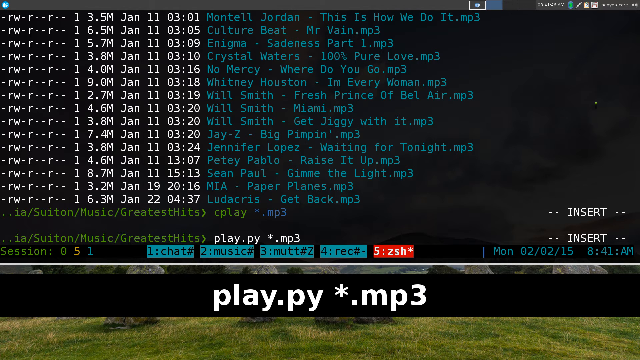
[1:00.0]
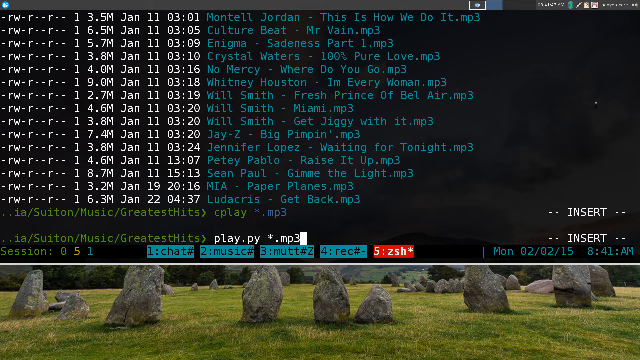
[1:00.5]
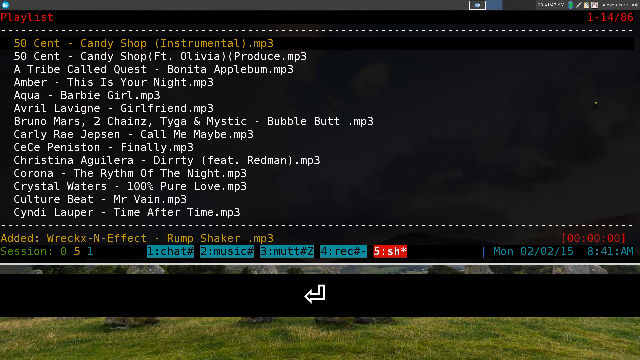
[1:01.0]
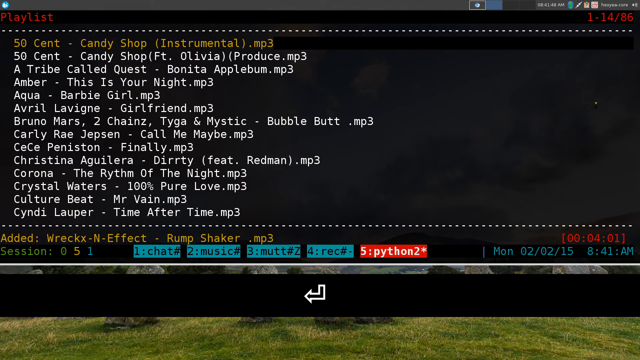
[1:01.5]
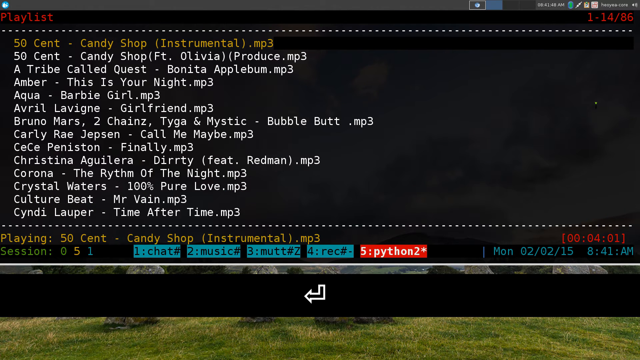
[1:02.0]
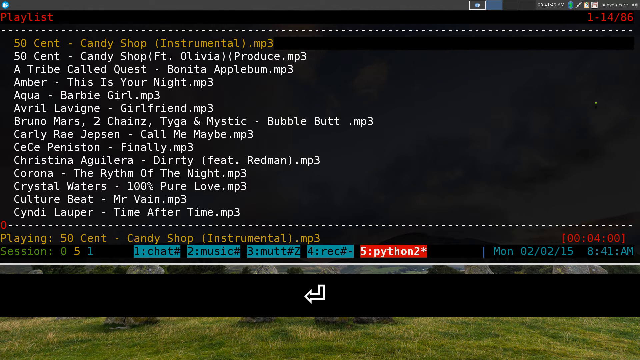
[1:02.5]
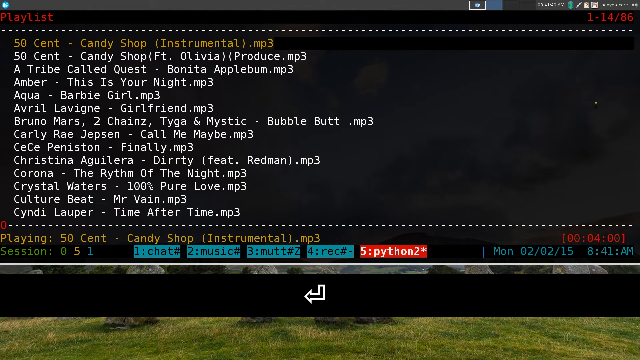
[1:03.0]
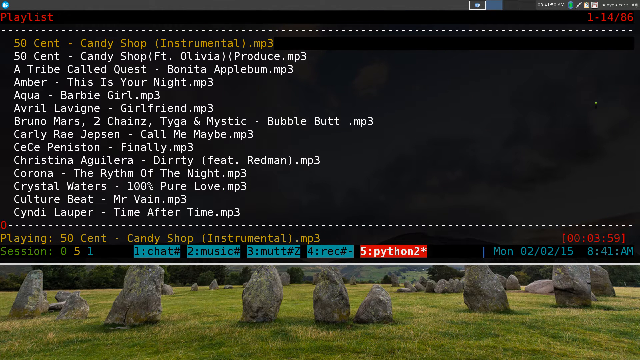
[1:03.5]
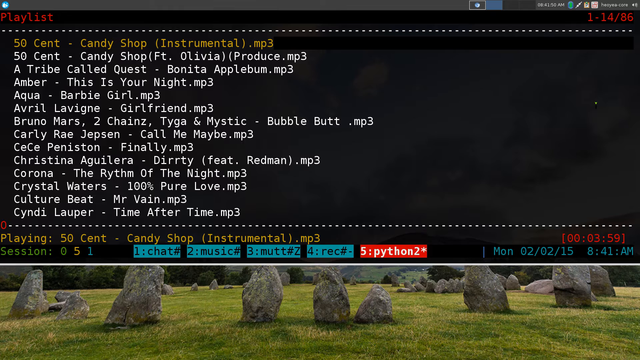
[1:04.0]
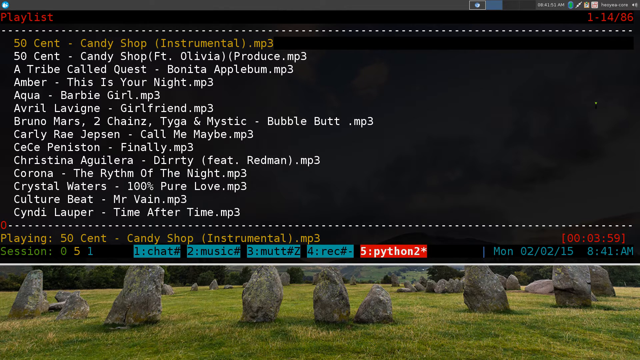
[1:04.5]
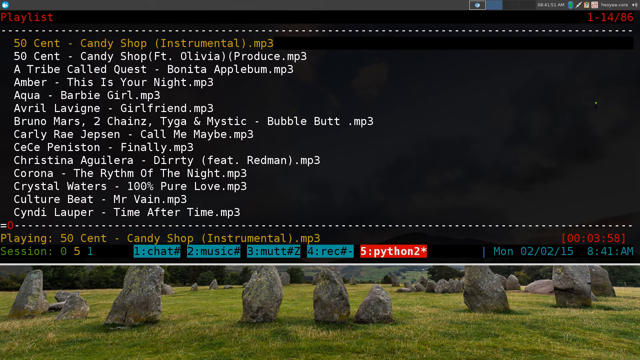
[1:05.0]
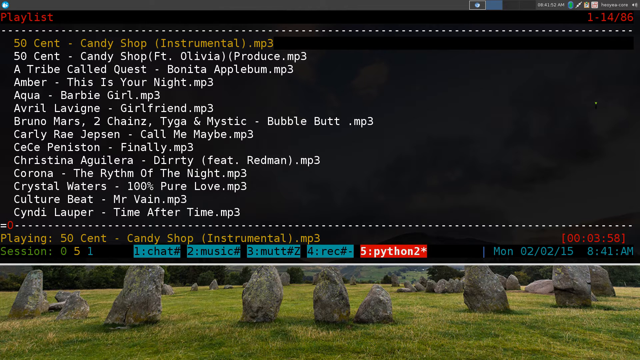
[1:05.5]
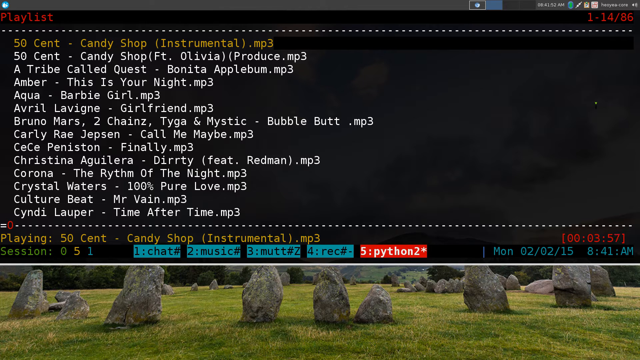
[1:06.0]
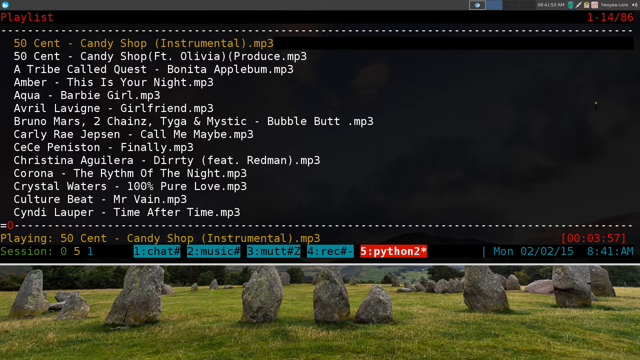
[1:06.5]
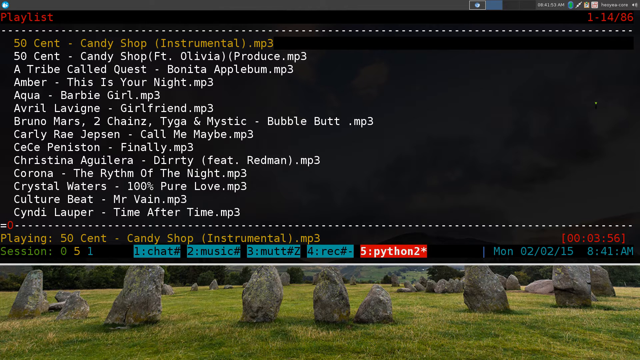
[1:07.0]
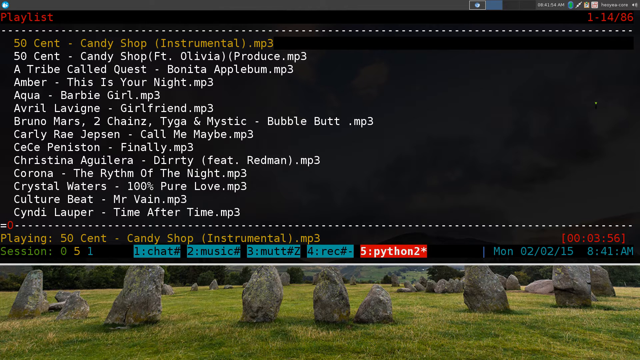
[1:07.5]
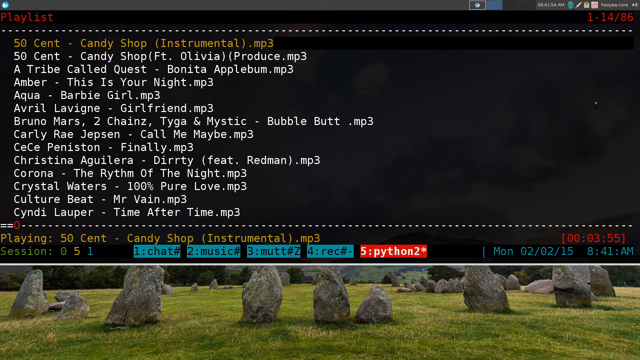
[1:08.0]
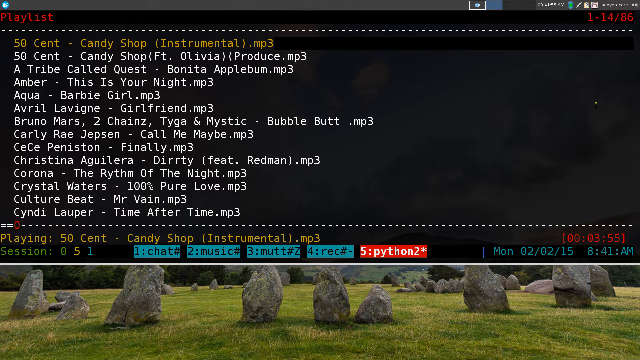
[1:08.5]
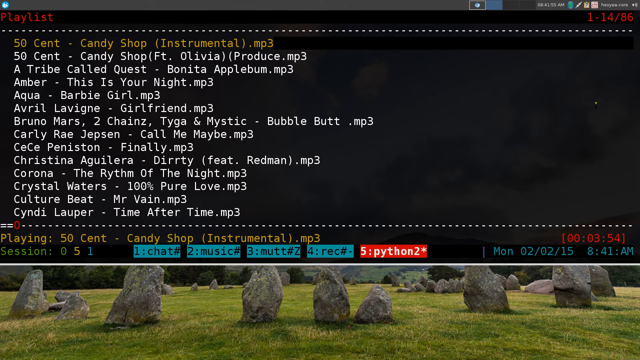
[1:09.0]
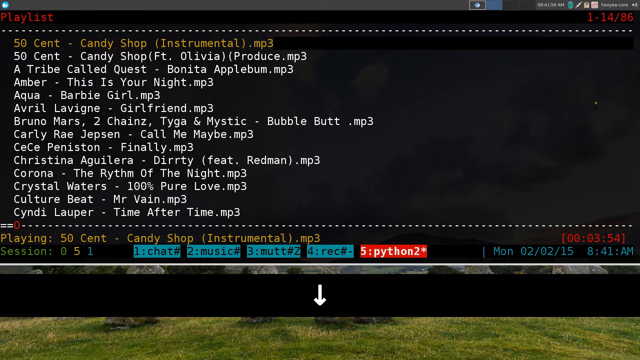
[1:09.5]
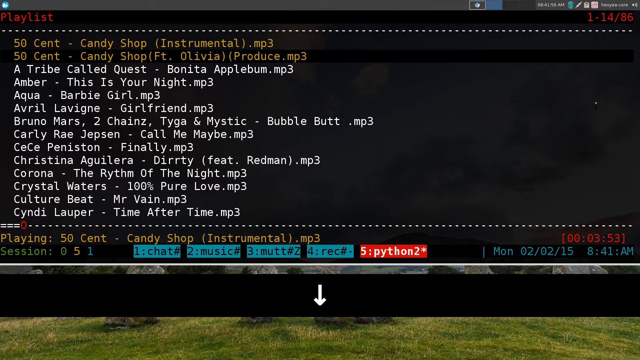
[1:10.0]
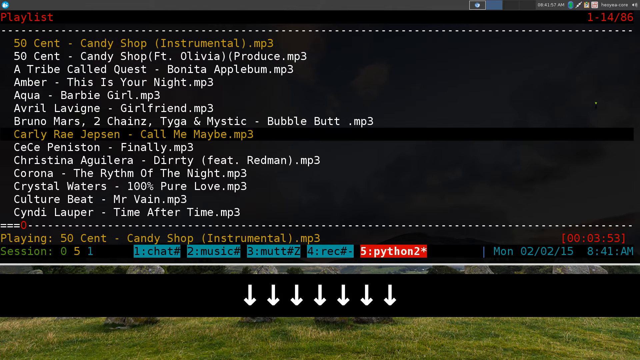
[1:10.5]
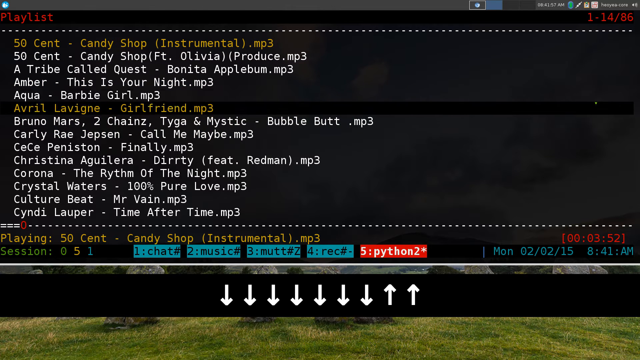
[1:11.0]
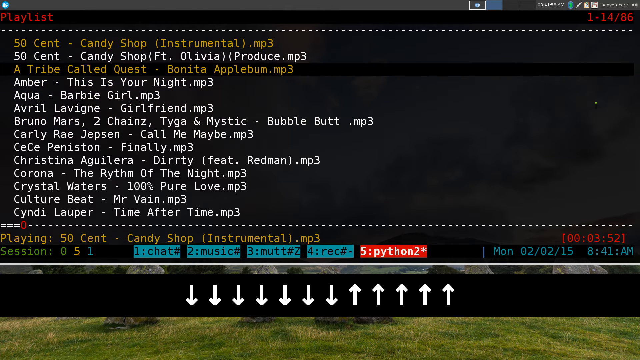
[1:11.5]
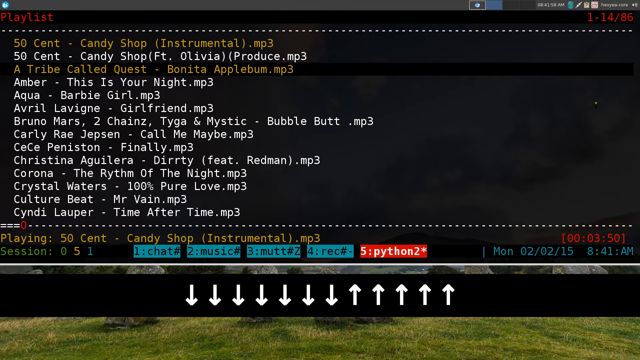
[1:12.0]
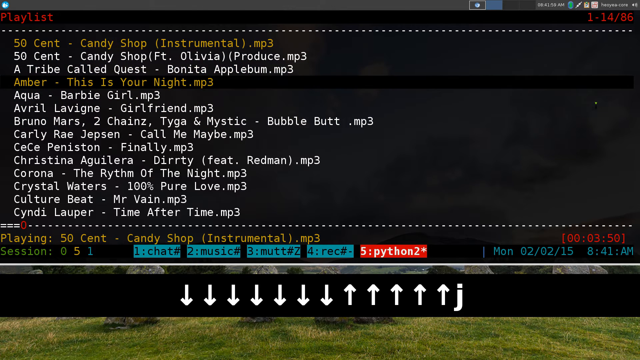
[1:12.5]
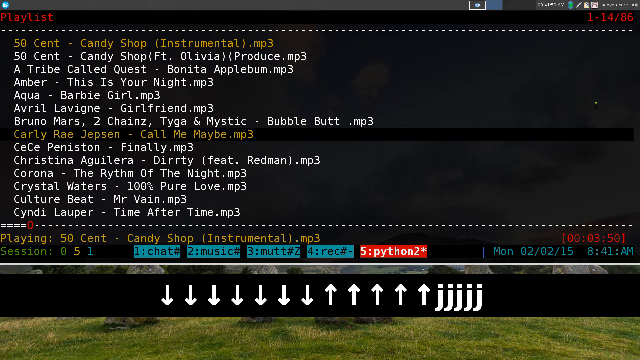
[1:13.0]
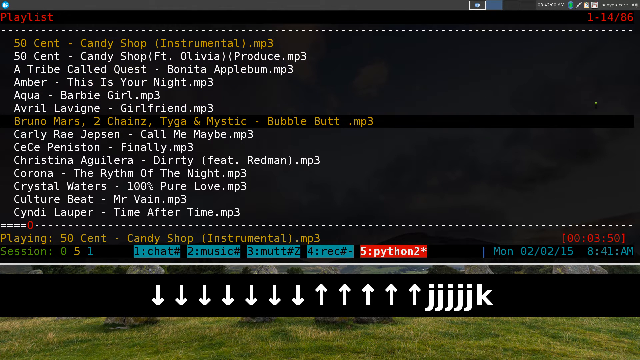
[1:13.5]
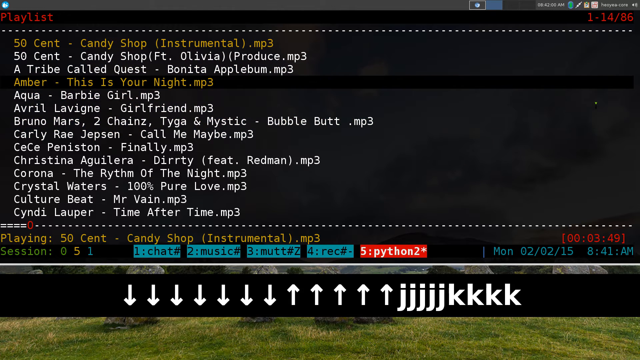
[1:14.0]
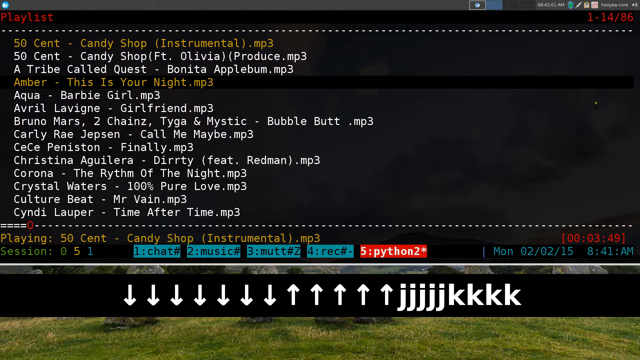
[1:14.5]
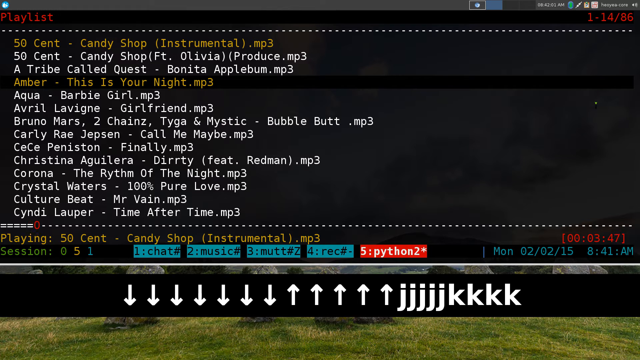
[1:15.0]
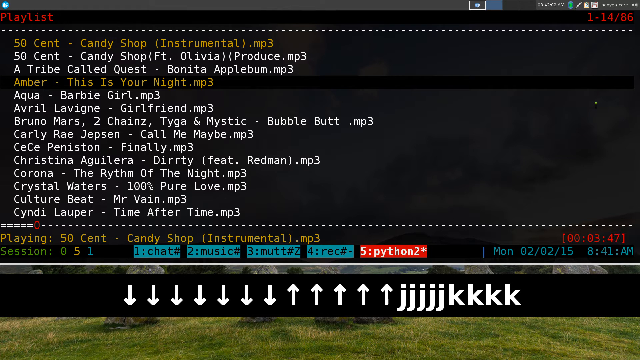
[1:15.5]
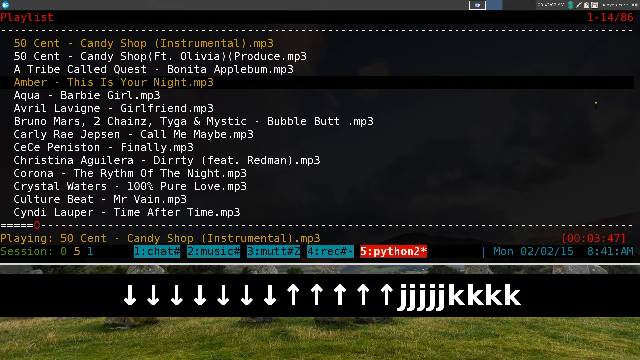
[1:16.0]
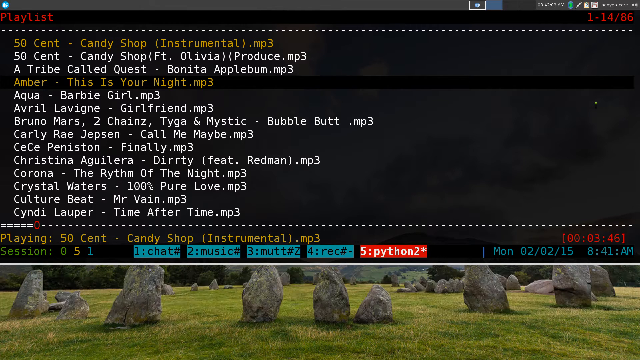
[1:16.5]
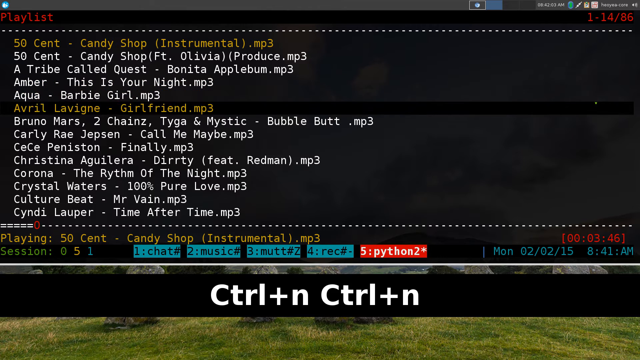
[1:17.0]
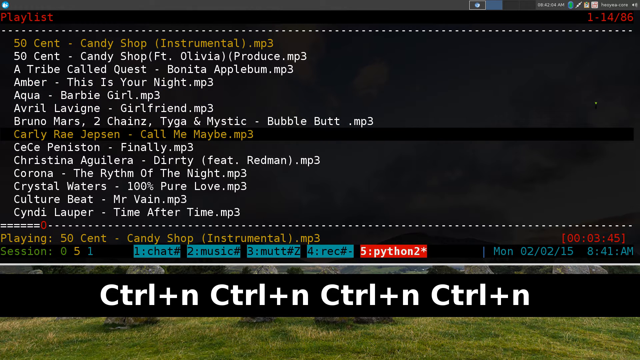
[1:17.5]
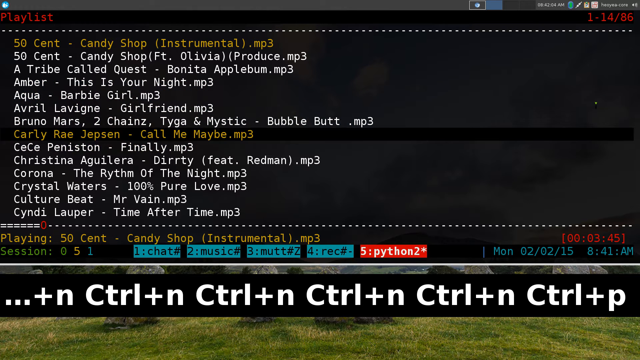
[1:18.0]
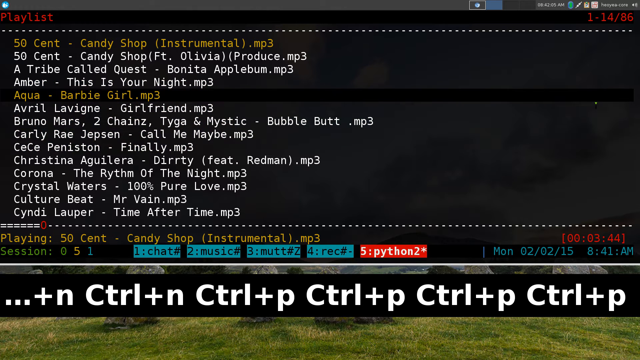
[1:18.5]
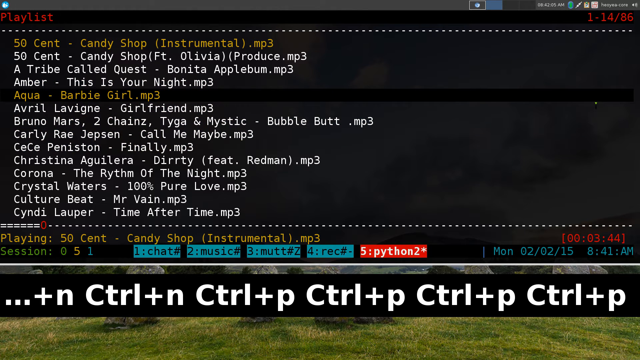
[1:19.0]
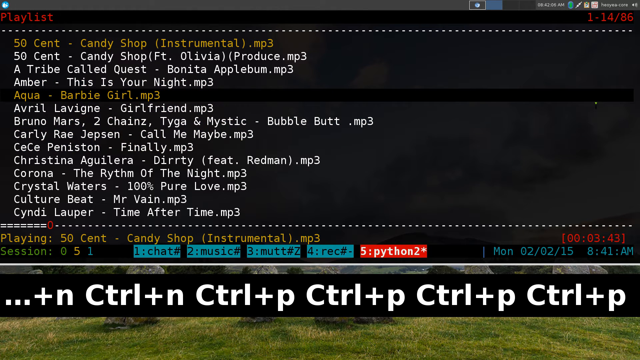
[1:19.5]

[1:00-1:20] After the user types play.py followed by *.mp3, a playlist player similar to the earlier one opens, but this time the word playlist and the time in the lower right corner showing how much of the song is left are red. The screen shows the first 14 songs of the playlist, out of 86 in total. The user presses enter, which starts playing the first song, 50 cent candy shop instrumental.mp3. The user scrolls up and down the song list with the up and down keys, then presses the J key five times, which moves down the list, and the K key four times, which moves up the list. The user then presses ctrl+n four times, moving the list down, and ctrl+p four times, moving the list up.